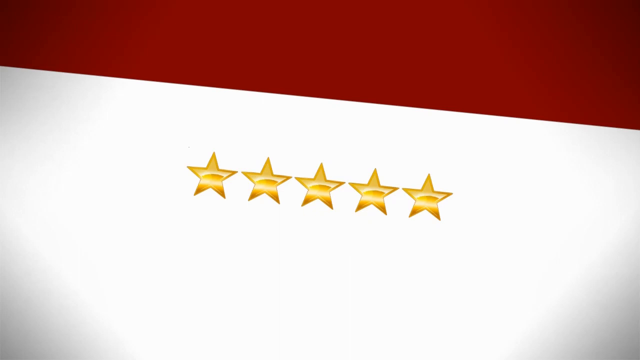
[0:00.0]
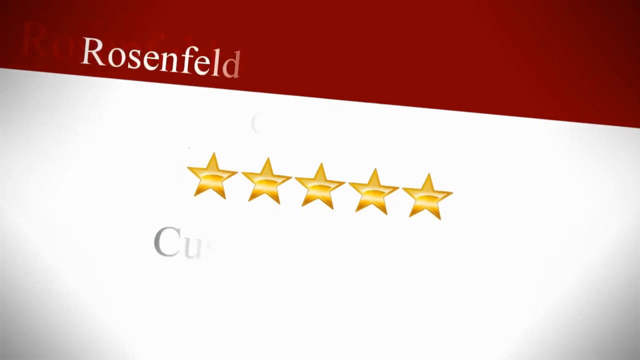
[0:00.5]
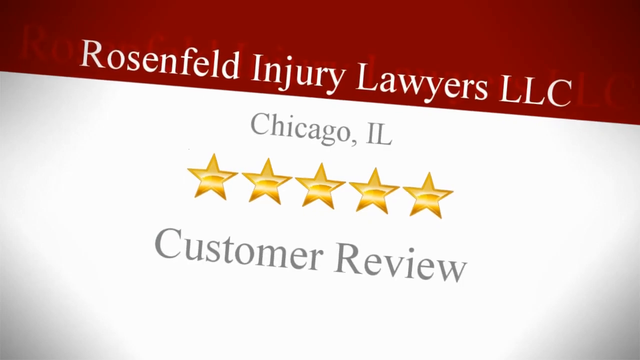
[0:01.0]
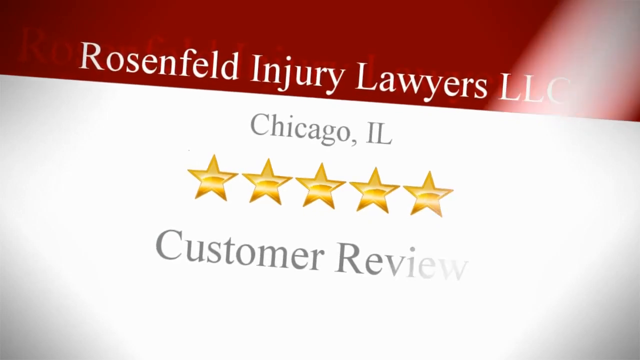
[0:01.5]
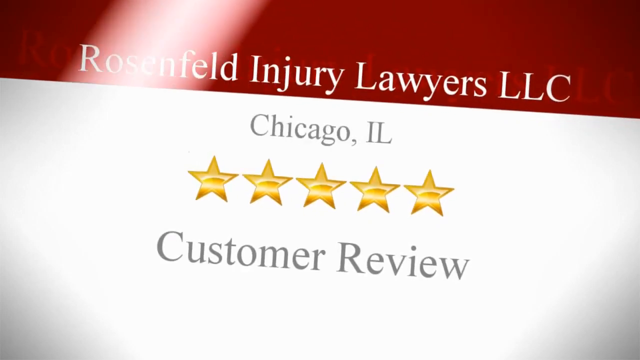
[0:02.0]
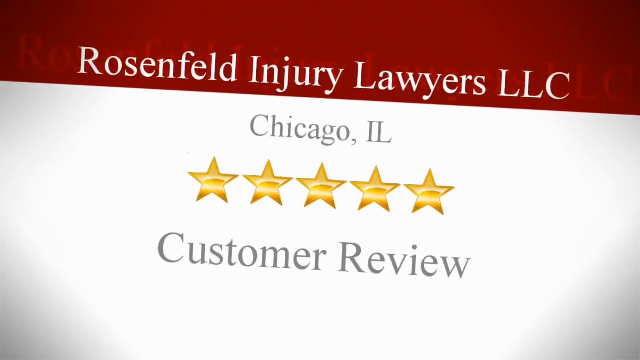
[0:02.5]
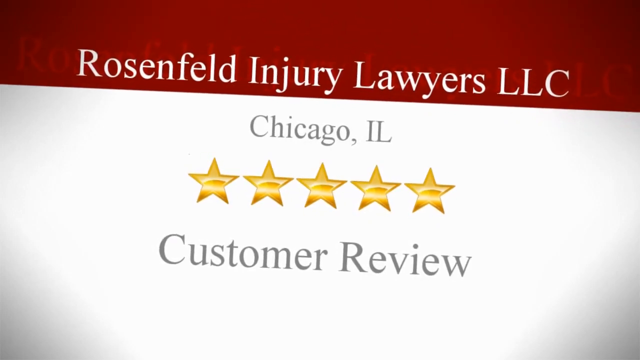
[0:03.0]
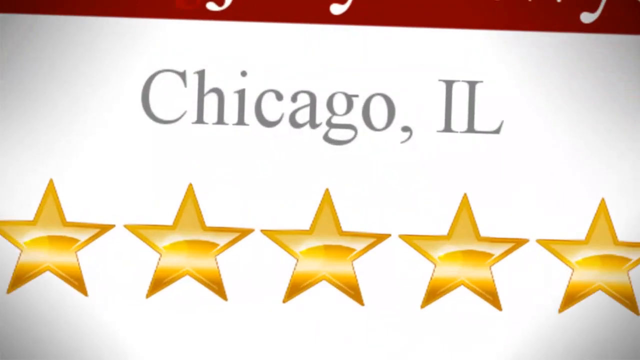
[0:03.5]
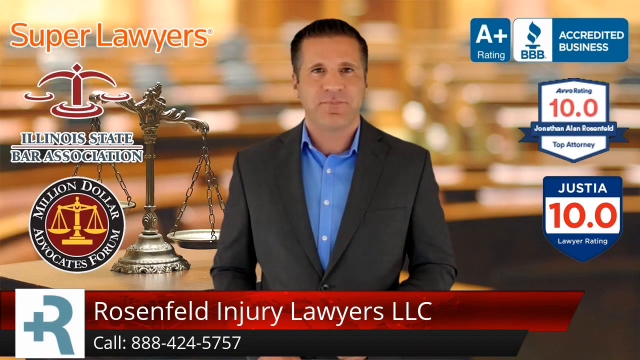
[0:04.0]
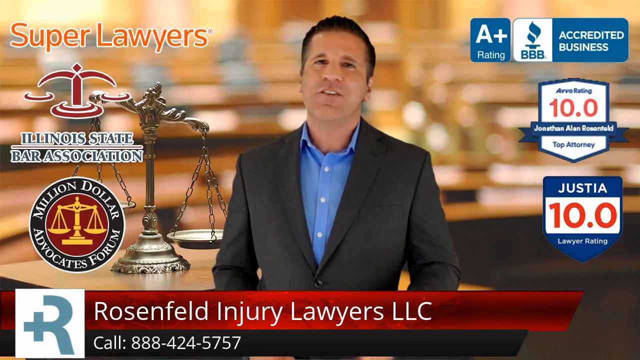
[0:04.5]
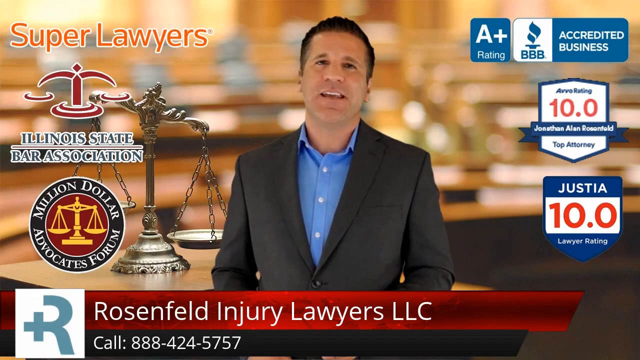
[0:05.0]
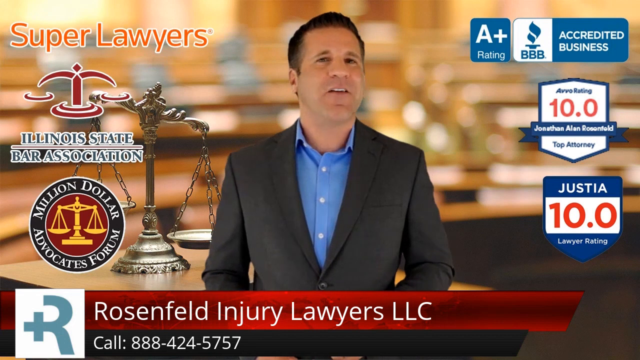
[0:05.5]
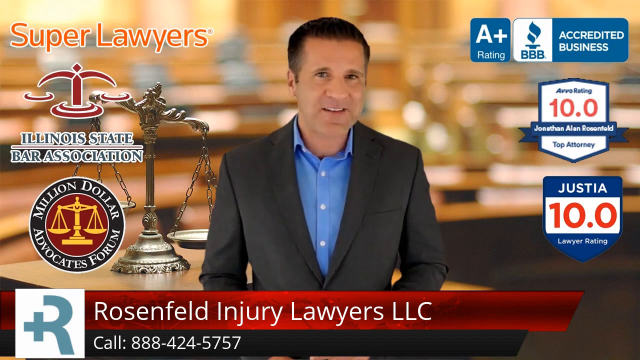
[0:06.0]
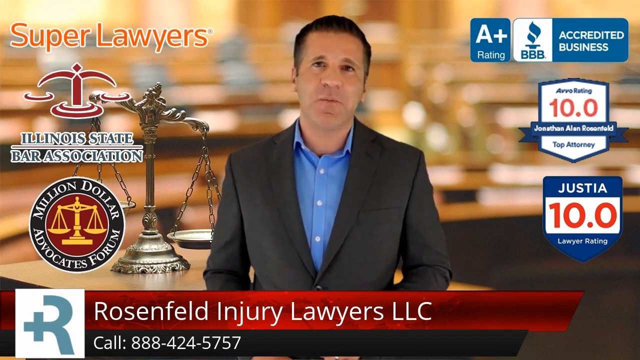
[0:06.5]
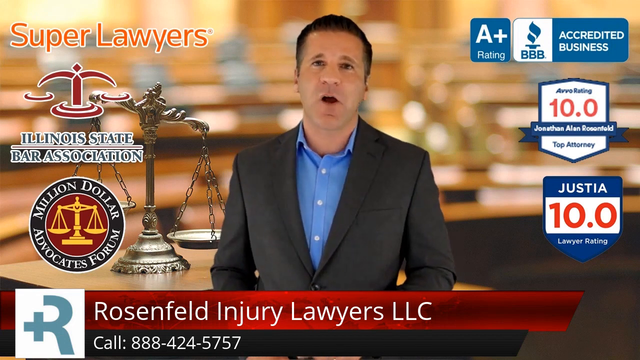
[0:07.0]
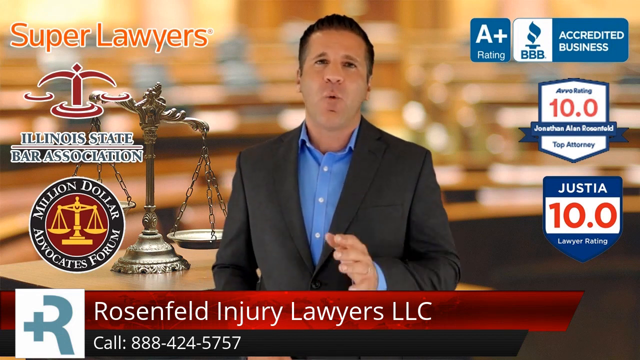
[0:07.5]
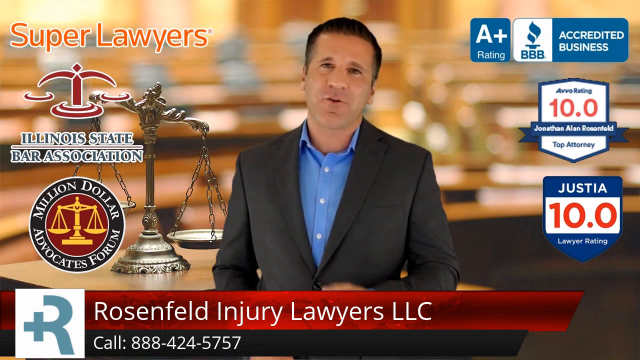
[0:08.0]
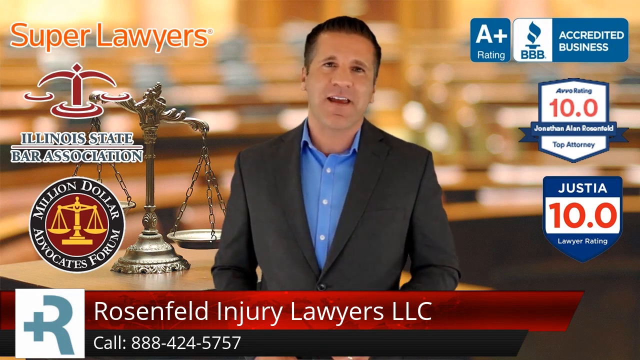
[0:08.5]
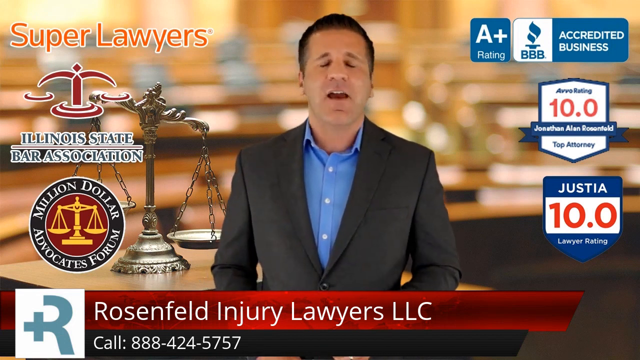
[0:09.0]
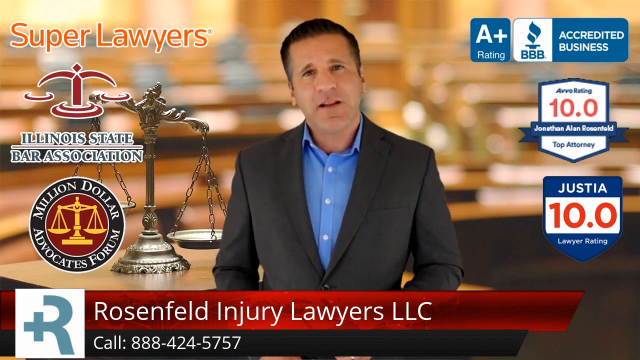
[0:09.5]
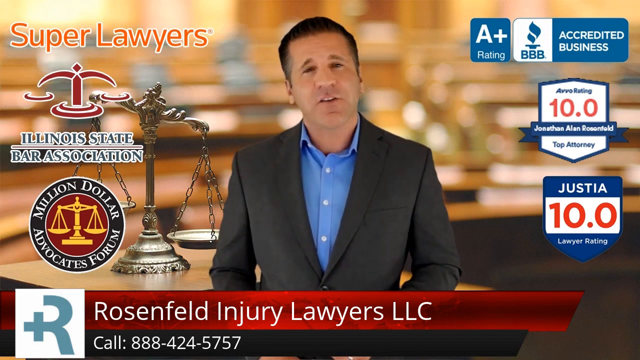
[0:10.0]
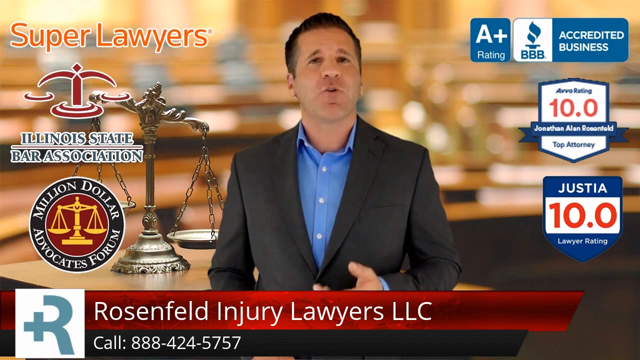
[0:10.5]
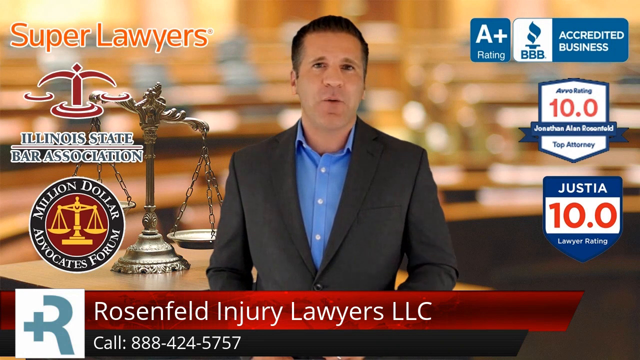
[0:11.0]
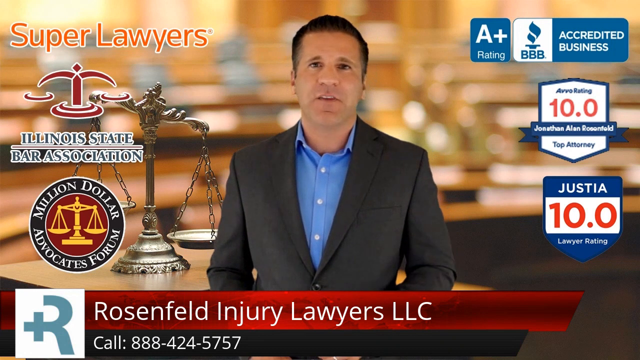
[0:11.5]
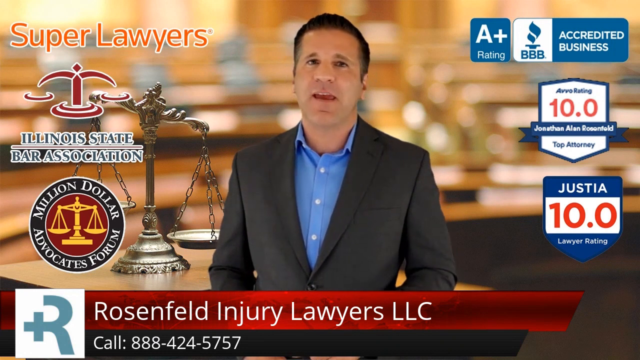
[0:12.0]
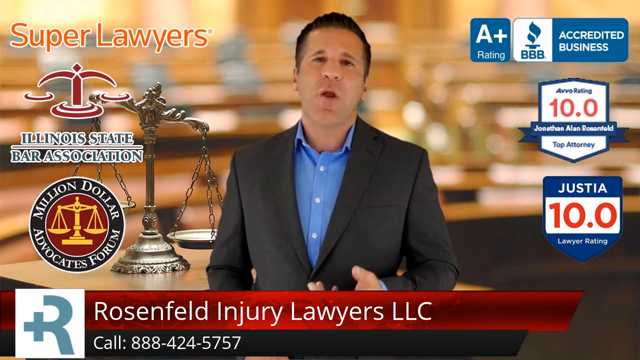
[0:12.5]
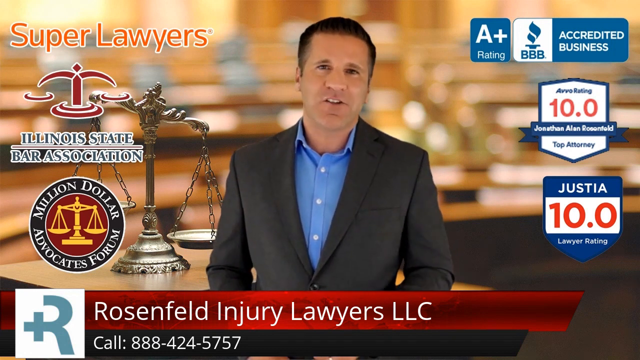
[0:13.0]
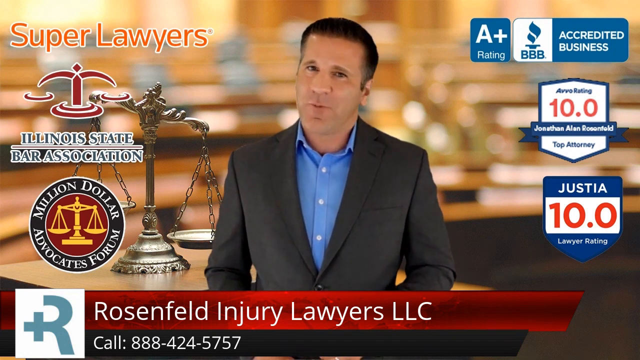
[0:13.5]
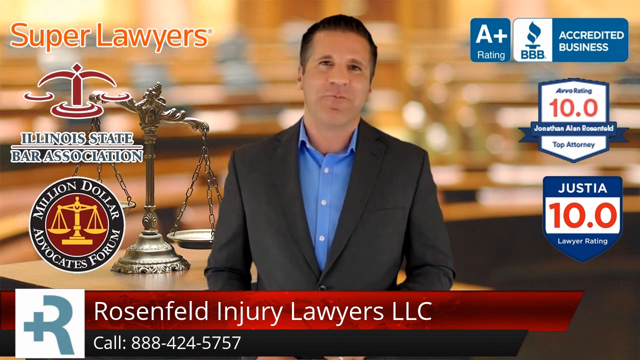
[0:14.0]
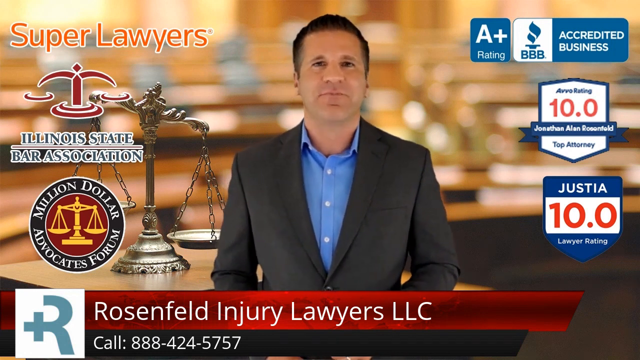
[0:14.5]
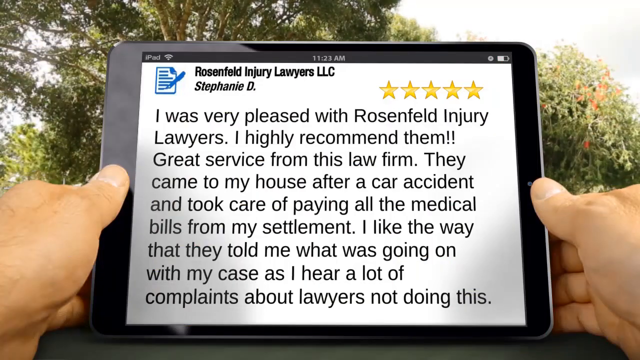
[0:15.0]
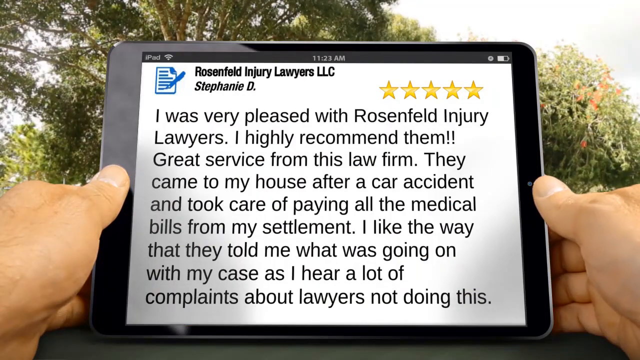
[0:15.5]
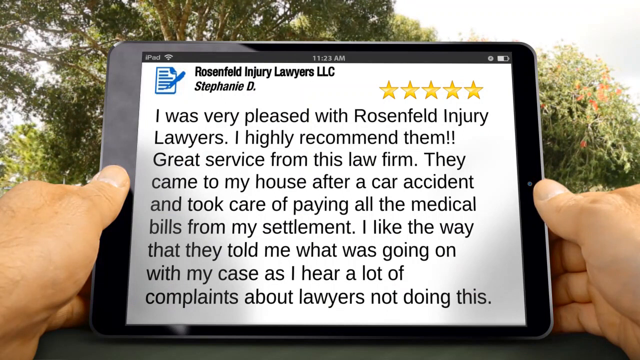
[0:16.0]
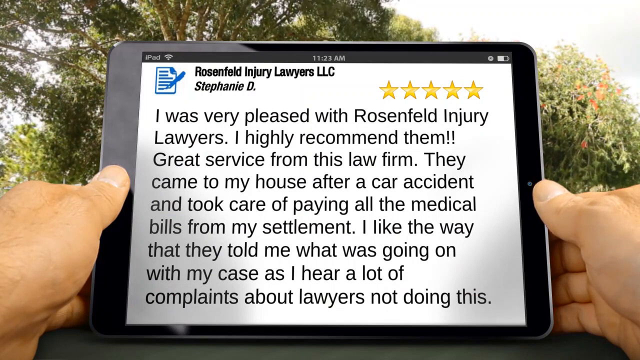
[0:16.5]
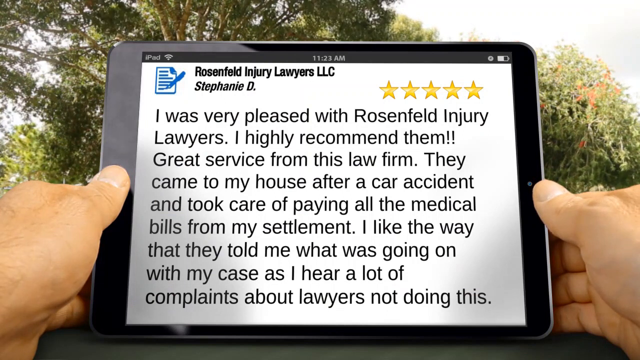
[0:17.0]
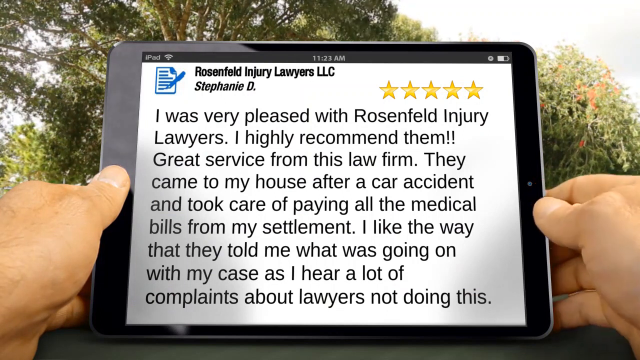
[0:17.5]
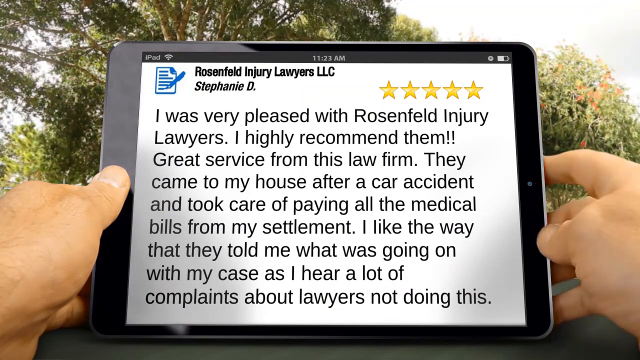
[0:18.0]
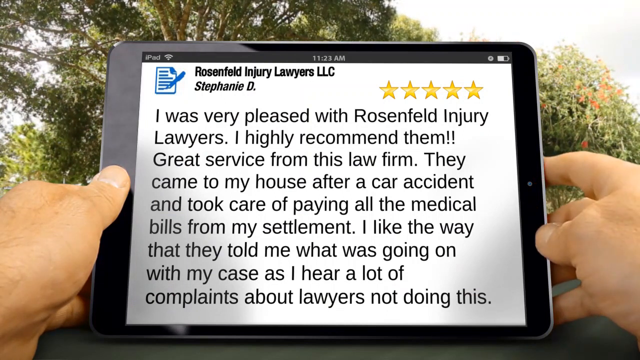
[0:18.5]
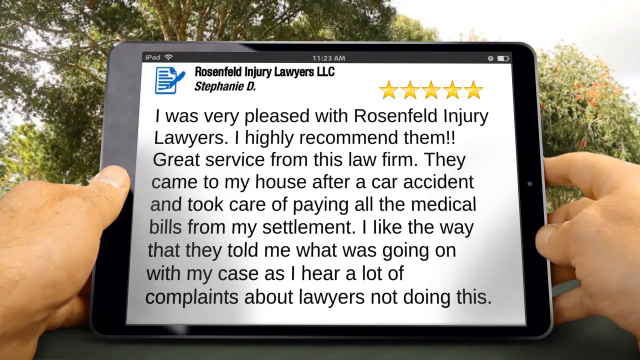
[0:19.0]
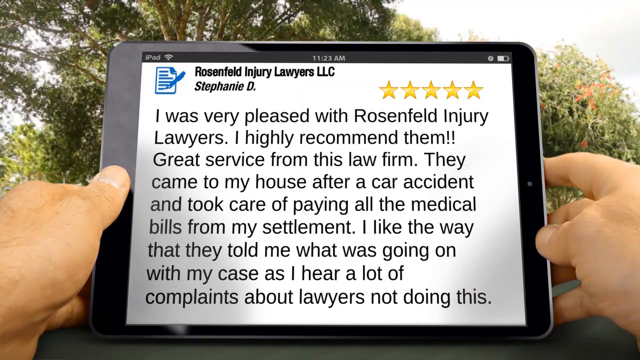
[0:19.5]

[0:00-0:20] On-screen text names Rosenfeld Injury Lawyers, LCC of Chicago, IL, with a five-star rating. Listed credentials include an "A plus rating" from the Triple B, "Justia 10.0 Lawyer Rating" and a Million Dollar Advocates Forum mention. A man speaks about the Rosenfeld lawyers. Contact details show the number 888-424-5757. A five-star review from Stephanie T. appears, with text including "I highly recommend them great service from this law firm They came to my house after a car accident and took care of paying all the medical bills from my settlement" and "I hear a lot of complaints about lawyers not doing this".